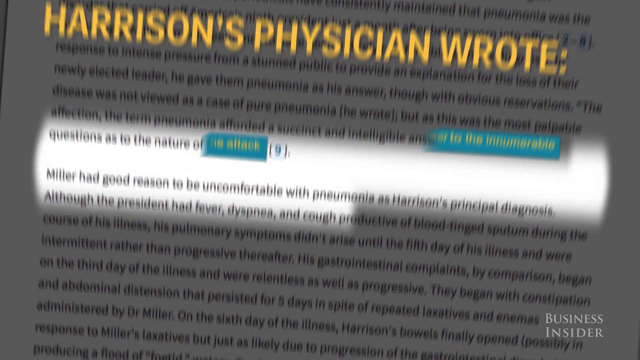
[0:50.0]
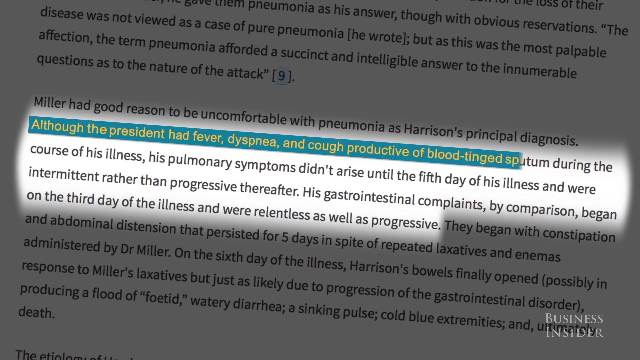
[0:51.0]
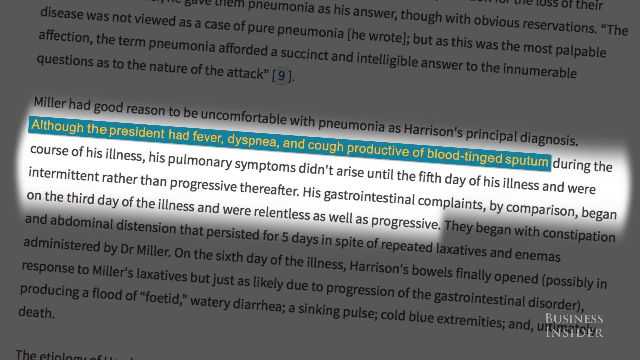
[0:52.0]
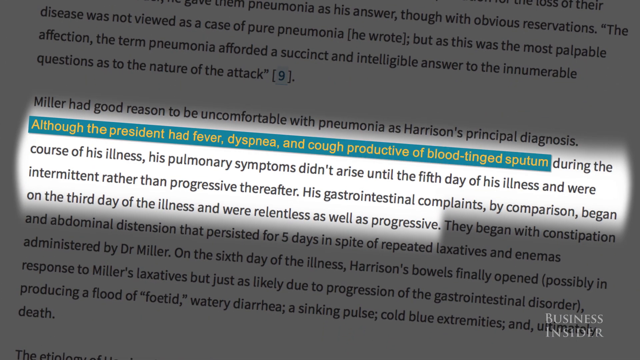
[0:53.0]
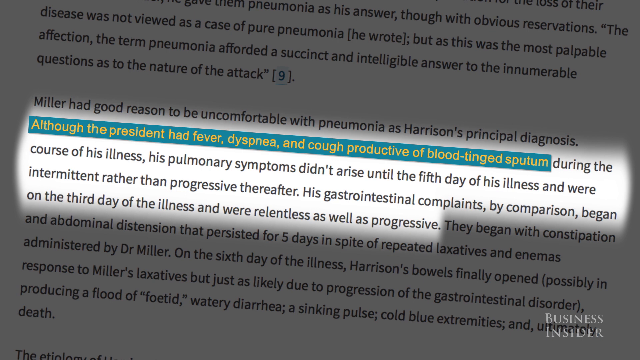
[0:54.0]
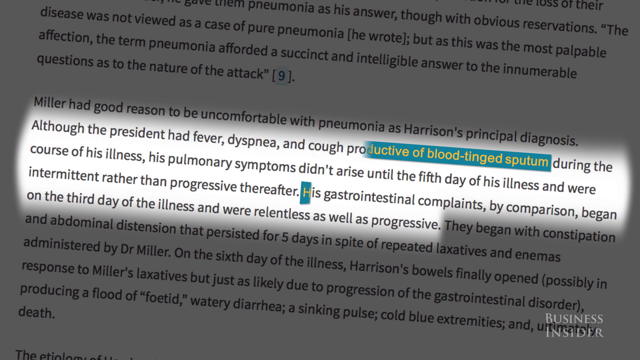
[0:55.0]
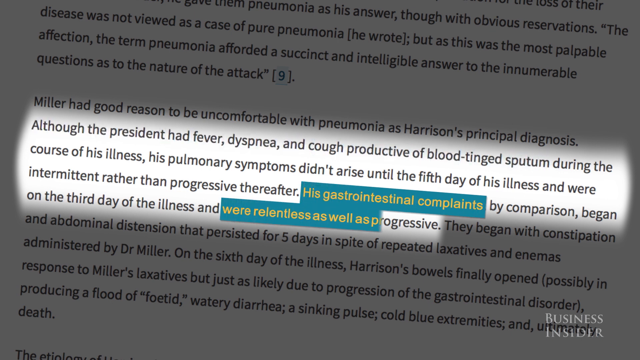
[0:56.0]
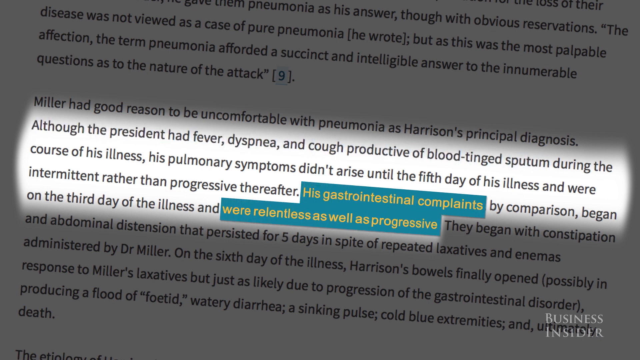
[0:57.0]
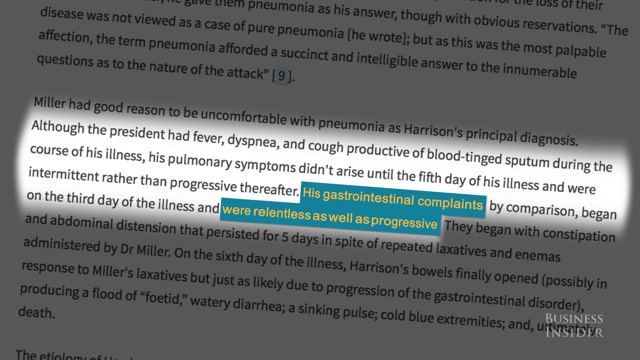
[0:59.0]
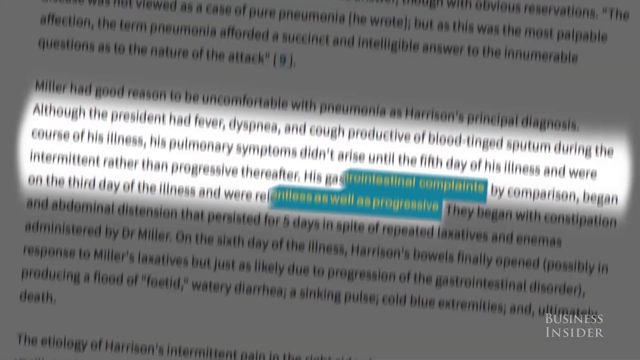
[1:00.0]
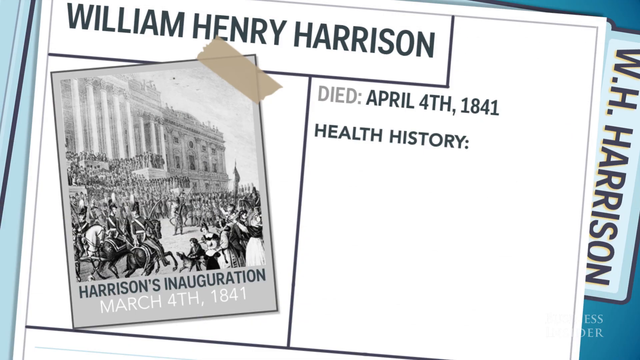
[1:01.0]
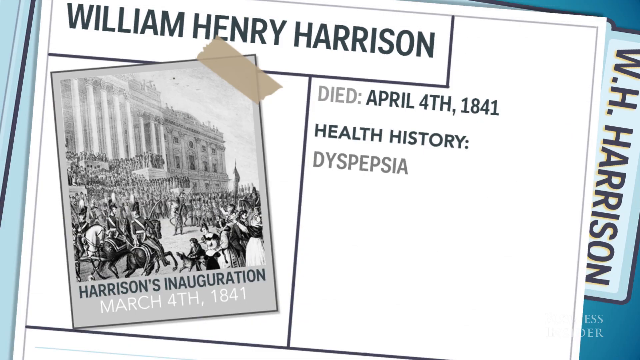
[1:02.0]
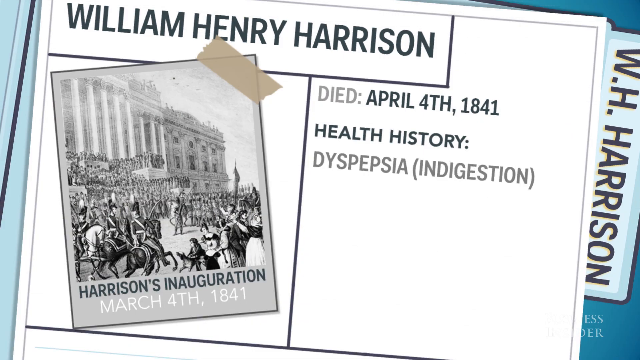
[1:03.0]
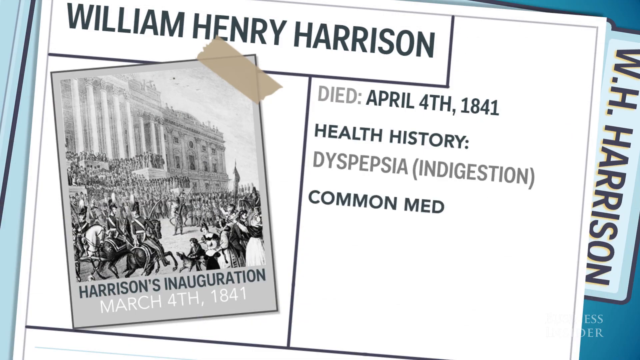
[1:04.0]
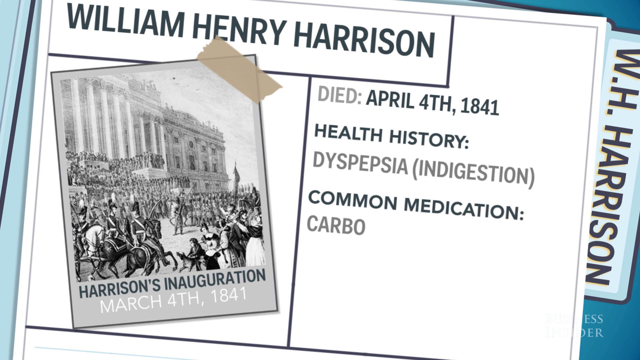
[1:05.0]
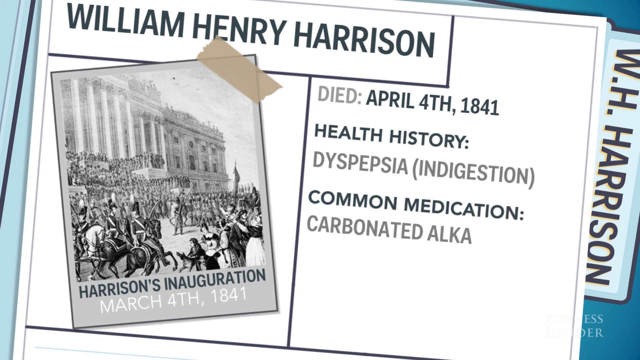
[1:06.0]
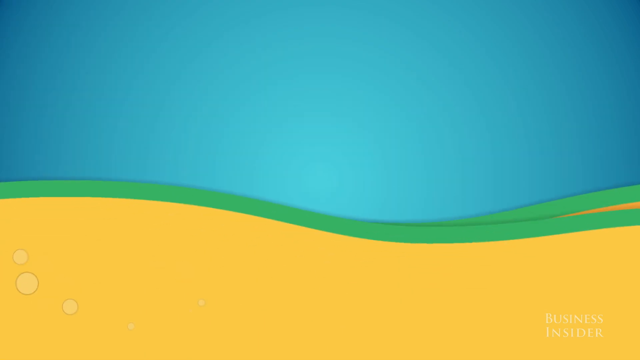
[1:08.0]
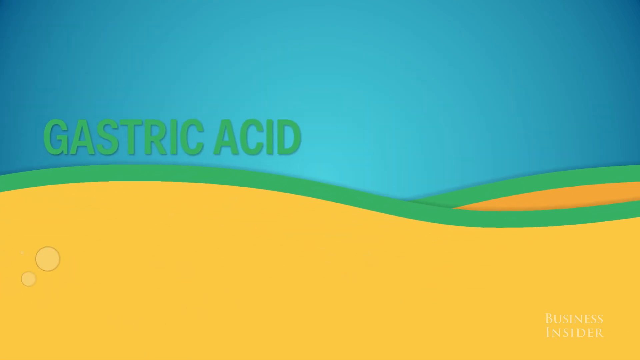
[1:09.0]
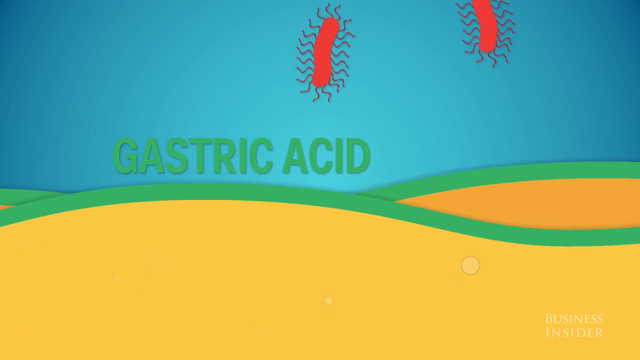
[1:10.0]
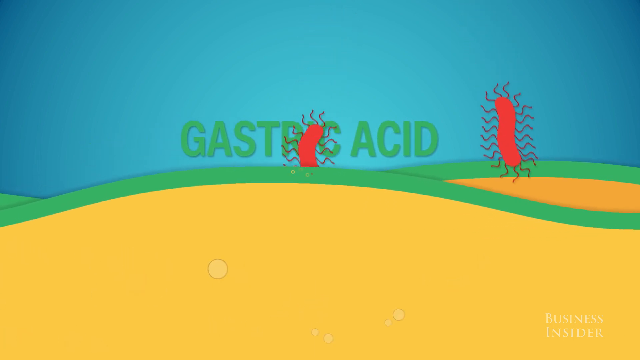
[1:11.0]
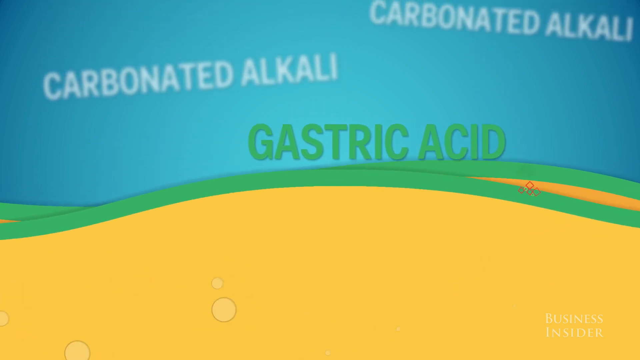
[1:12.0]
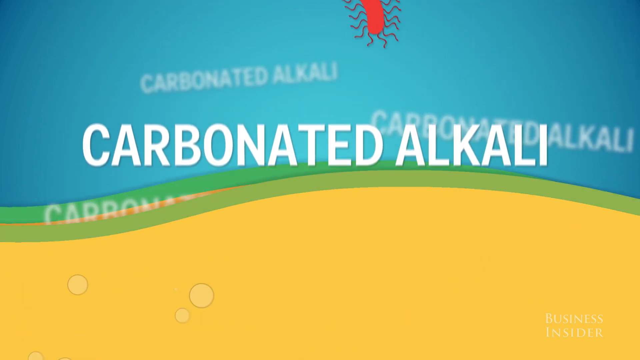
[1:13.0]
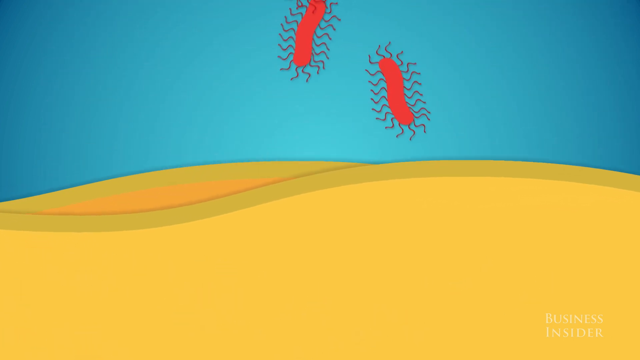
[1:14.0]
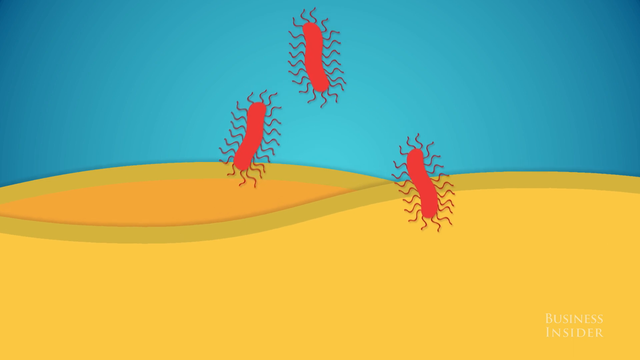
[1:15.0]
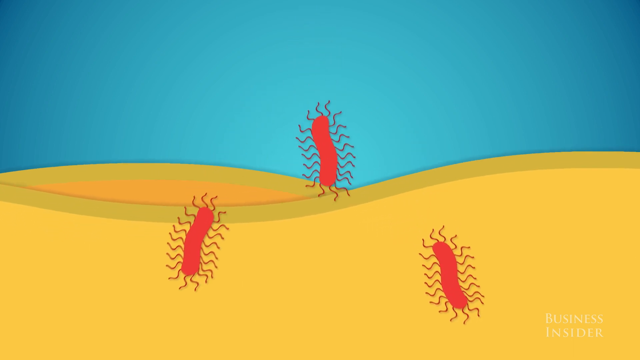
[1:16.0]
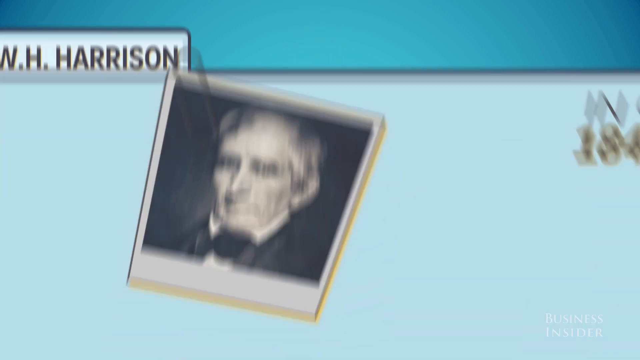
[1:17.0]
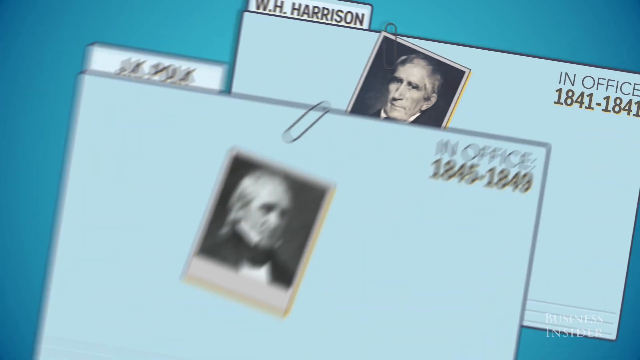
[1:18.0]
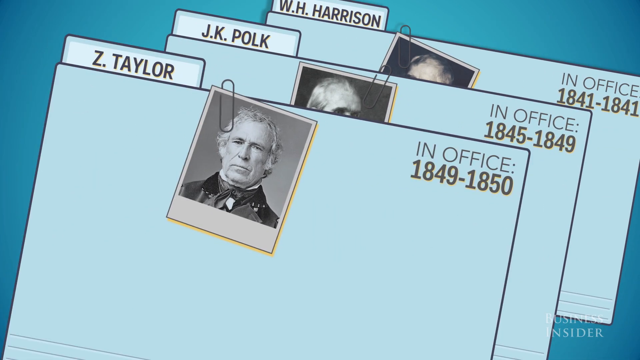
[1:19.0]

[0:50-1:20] A zoomed-in image of the article shows a highlighted passage stating that although the president had fever, dyspnea, and a cough productive of blood-tinged sputum during his illness, his pulmonary symptoms did not arise until the fifth day and were intermittent rather than progressive thereafter. The text goes on to mention gastrointestinal complaints that were relentless by the third day. The next shot shows the William Henry Harrison folder with "died April 4, 1841" and a health history of dyspepsia and indigestion, with carbonated alkali given as the common medication for it. The words "carbonated alkali" then appear along with an illustration of the bugs that likely infected Harrison.